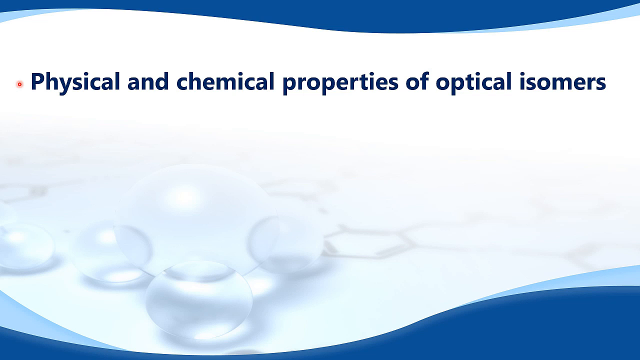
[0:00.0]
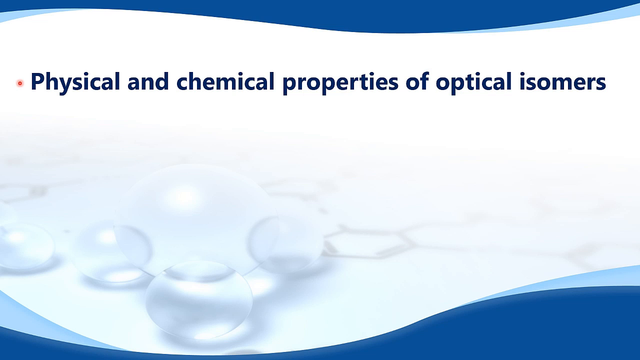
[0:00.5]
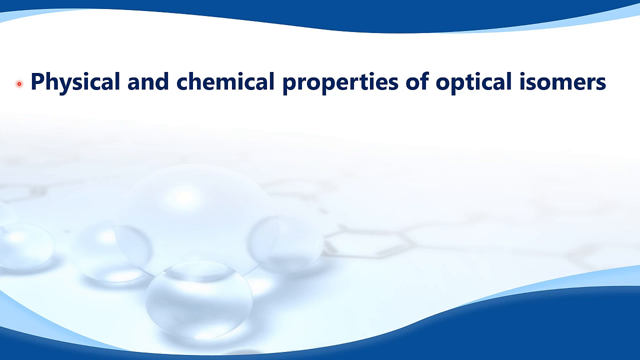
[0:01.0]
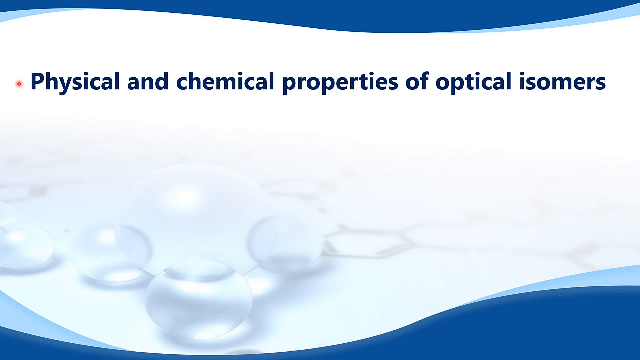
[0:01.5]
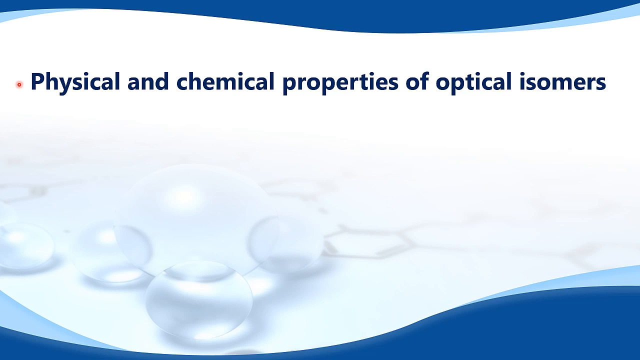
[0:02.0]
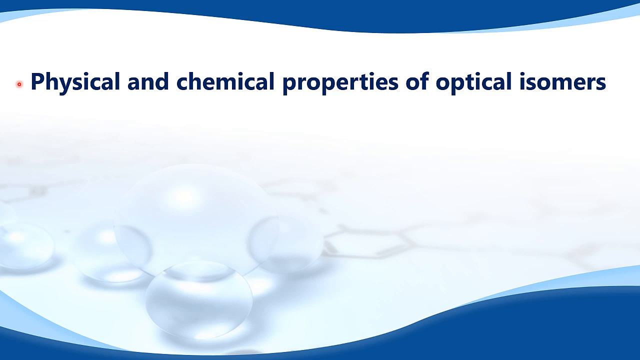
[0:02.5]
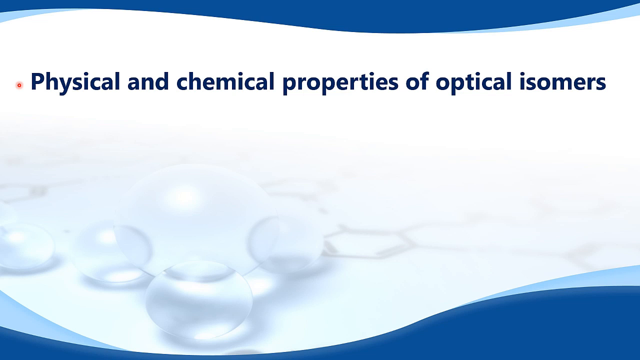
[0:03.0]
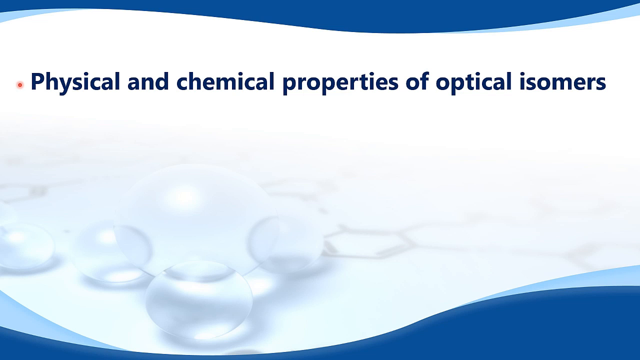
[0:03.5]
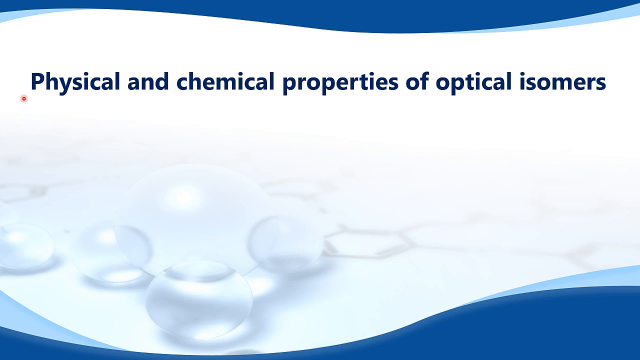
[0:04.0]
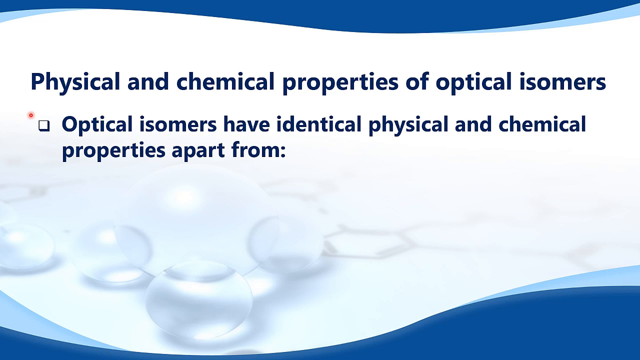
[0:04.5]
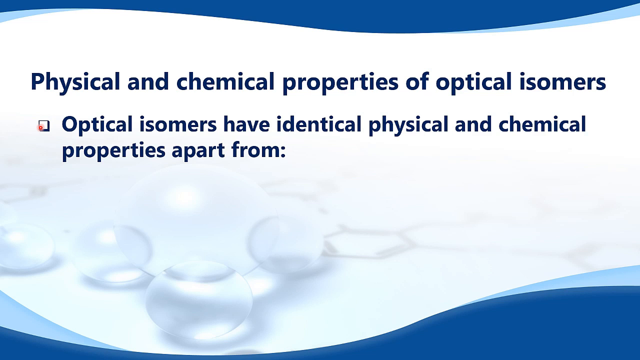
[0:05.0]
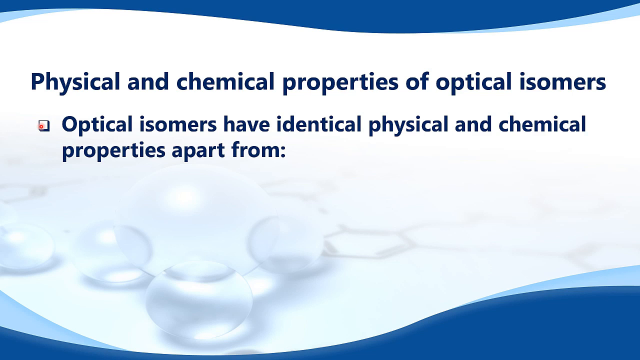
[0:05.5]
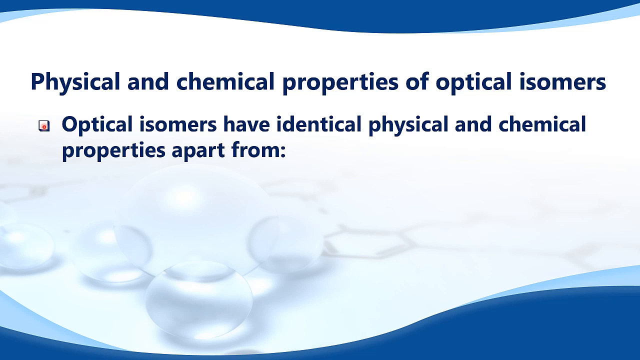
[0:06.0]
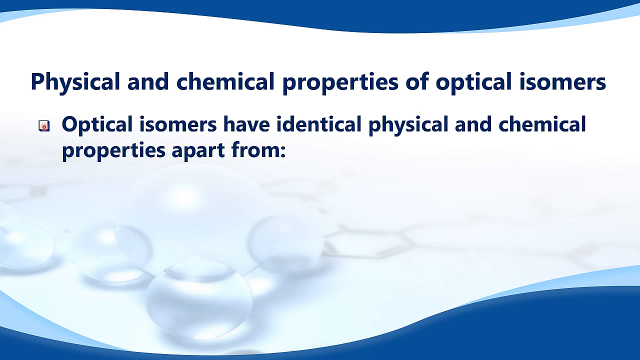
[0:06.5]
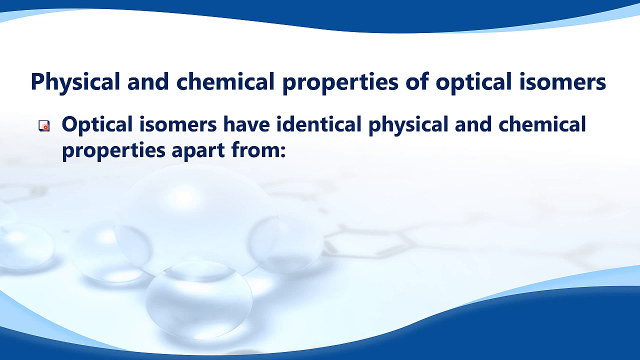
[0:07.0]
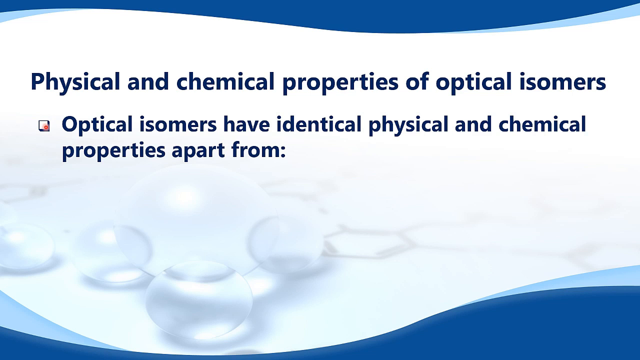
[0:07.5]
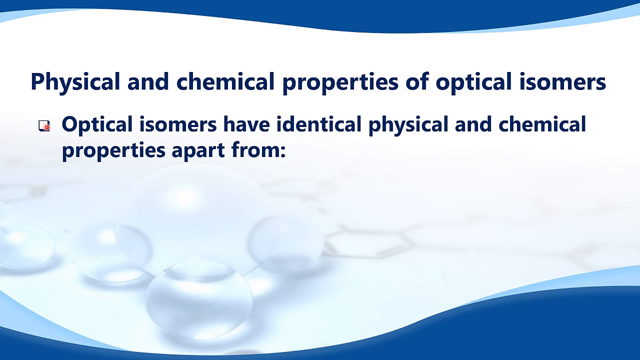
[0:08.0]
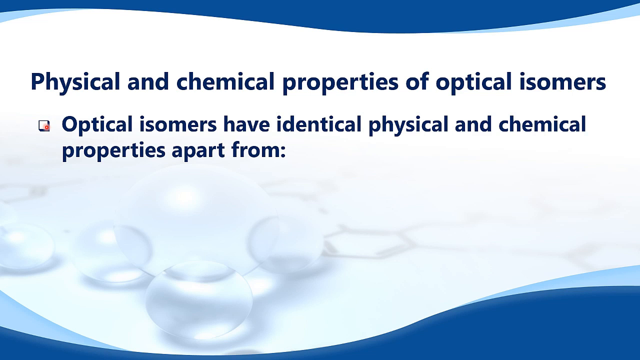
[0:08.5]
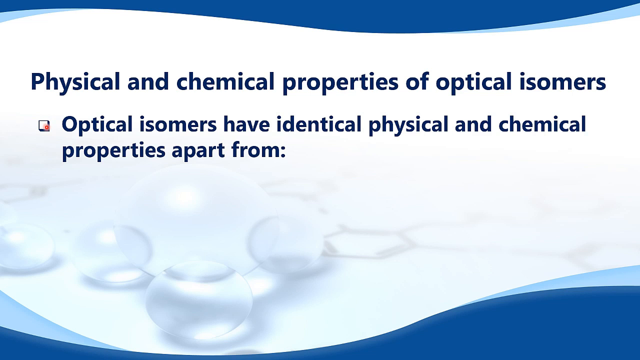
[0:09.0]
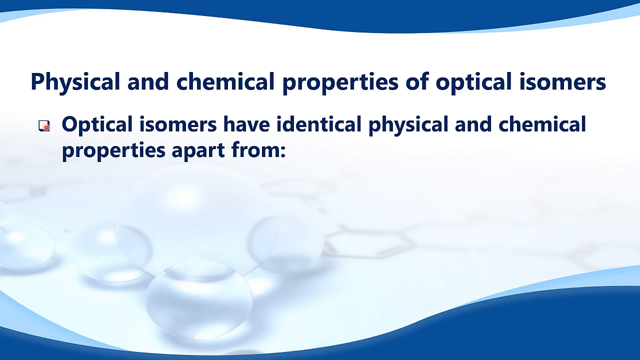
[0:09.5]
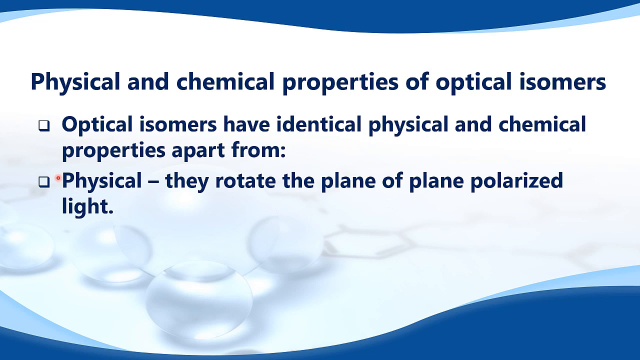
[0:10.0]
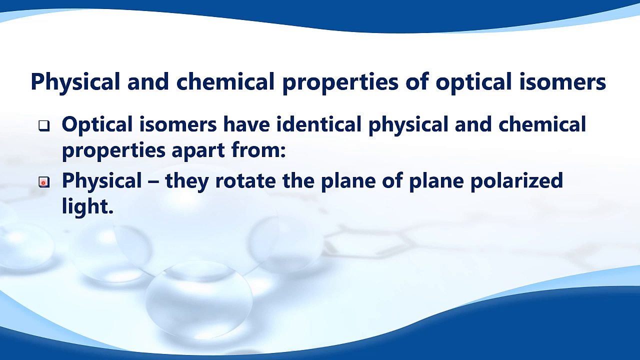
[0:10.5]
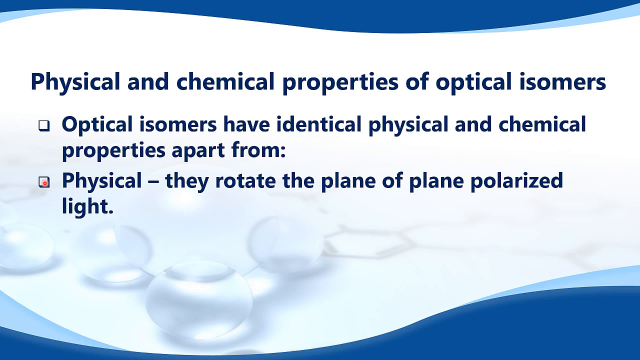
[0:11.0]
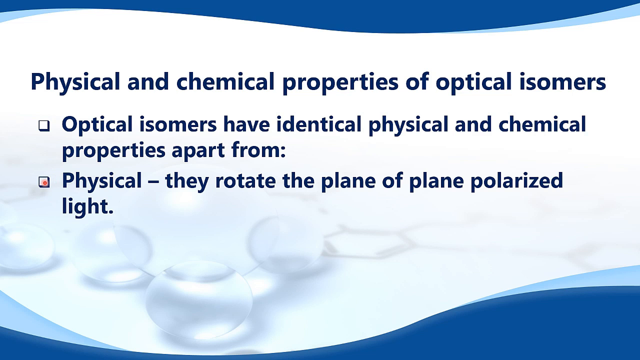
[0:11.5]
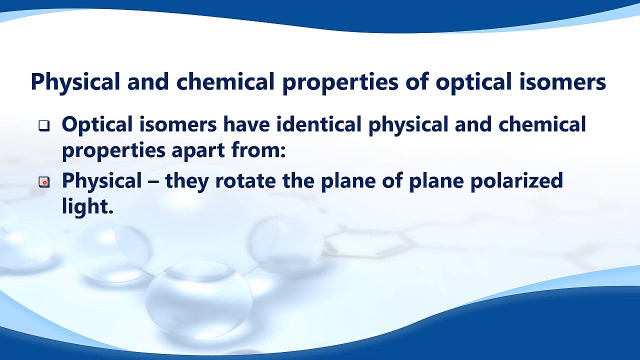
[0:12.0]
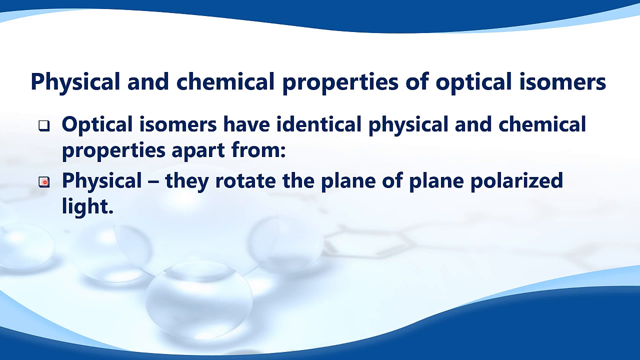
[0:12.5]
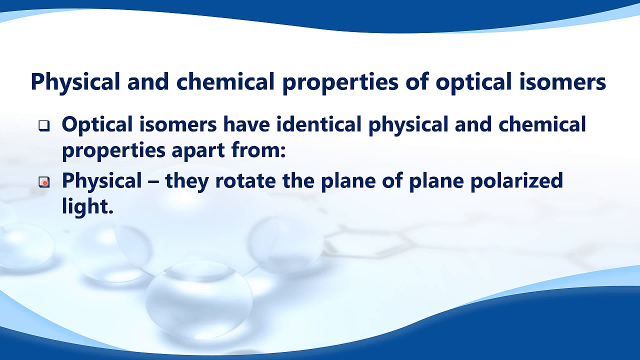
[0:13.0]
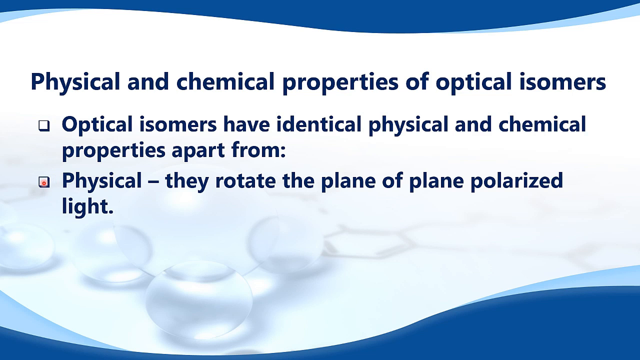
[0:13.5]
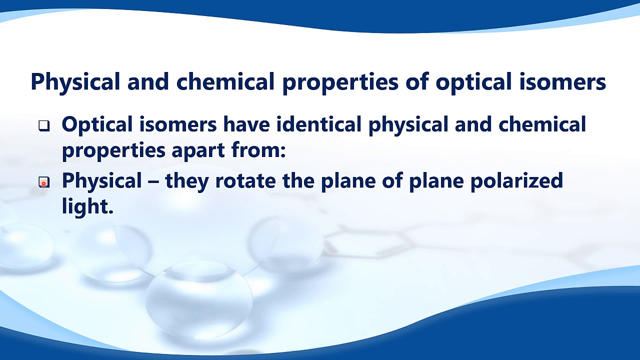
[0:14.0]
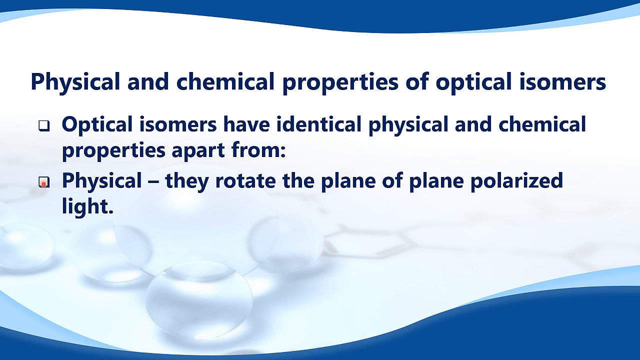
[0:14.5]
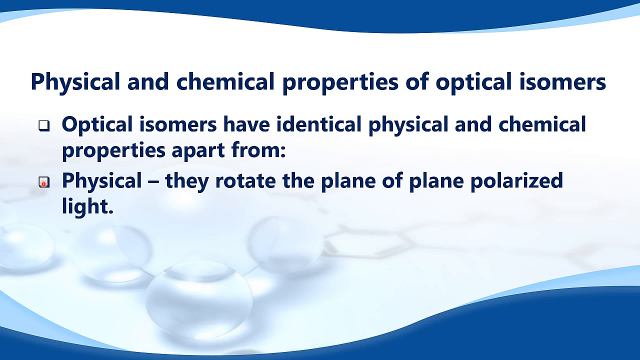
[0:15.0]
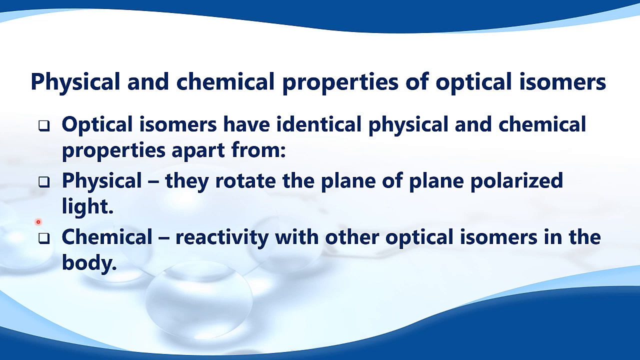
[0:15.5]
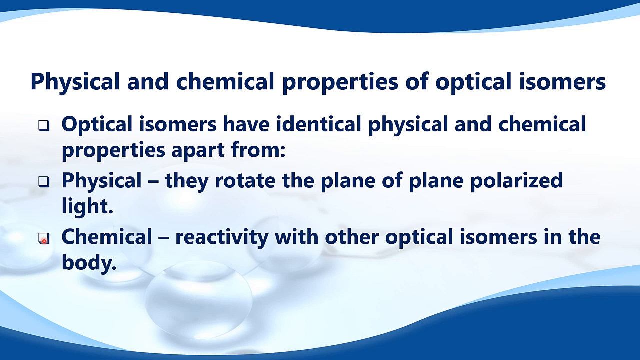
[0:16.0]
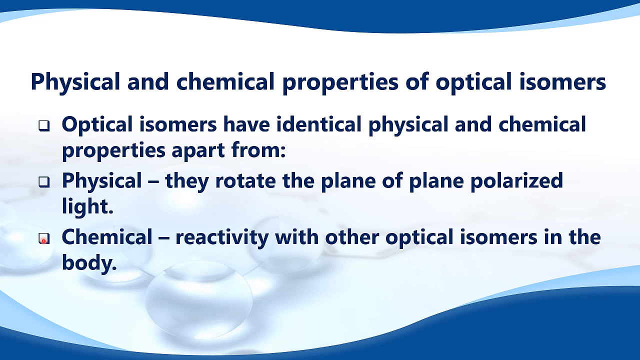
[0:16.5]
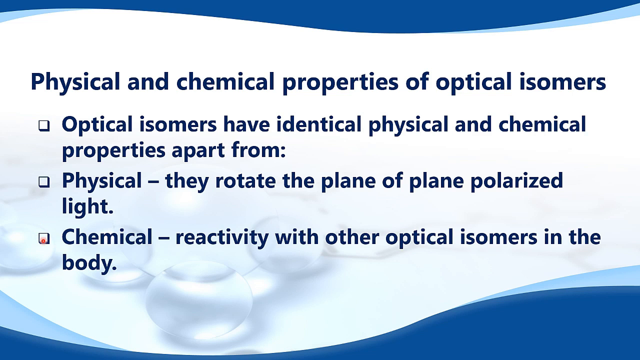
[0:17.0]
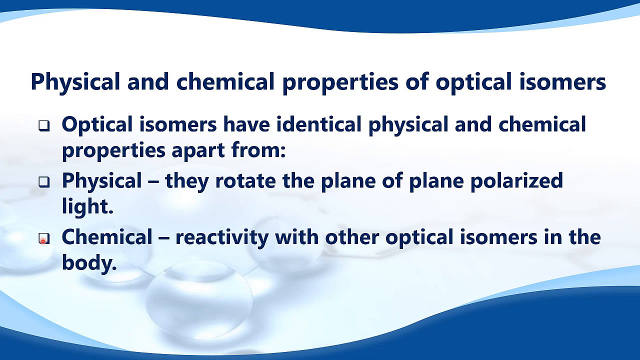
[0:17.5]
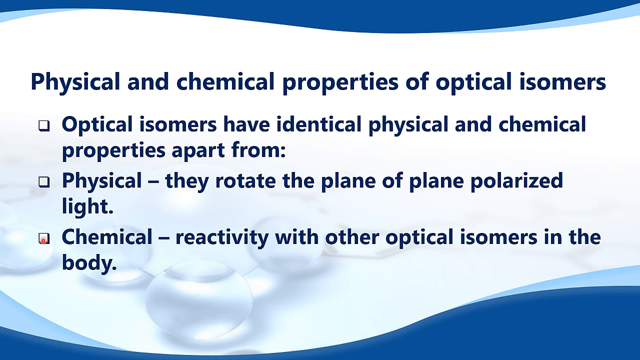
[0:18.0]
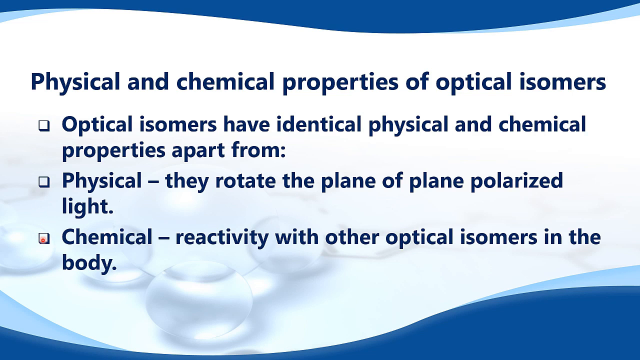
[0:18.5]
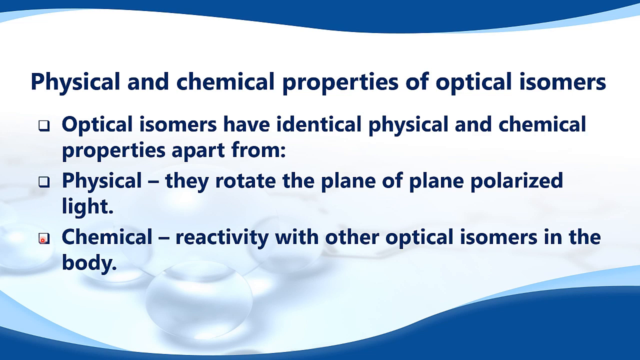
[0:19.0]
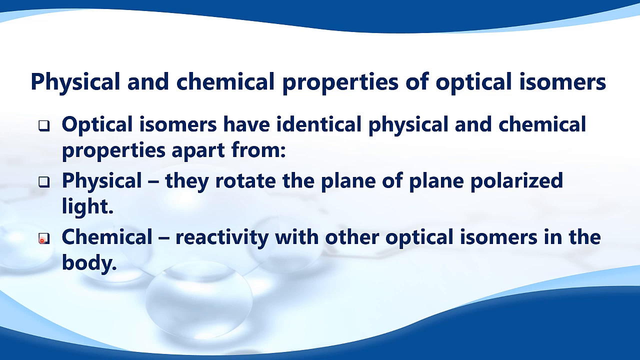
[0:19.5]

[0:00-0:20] The video looks like a science video. It has a white background with what almost look like little clear bubbles or contact lenses scattered at the bottom. A blue wavy graphic runs across the top, blue with a lighter, baby blue outline or shadow, and the same graphic runs along the bottom. Dark blue text appears reading "physical and chemical properties of optical isomers". Three bullet points then come down, each marked by a very small square instead of a dot. The first reads "optical isomers have identical physical and chemical properties apart from" followed by a semicolon. The second reads "physical - they rotate the plane of plane polarized light." The third reads "chemical - reactivity with other optical isomers in the body." Each of the last two ends with a period. What looks like a small laser pointer, a little orange dot, appears to the left of the title, and as each bullet point appears one by one, the dot moves into its square, so it looks like it is pointing at each item.